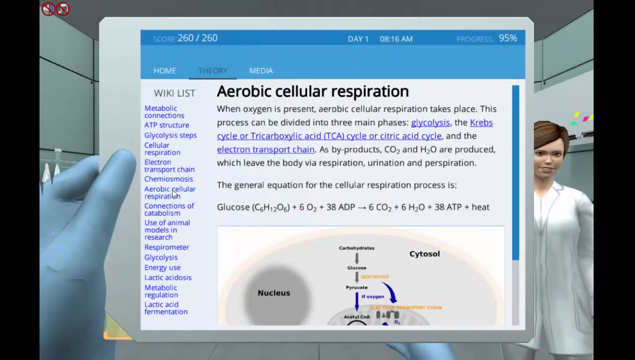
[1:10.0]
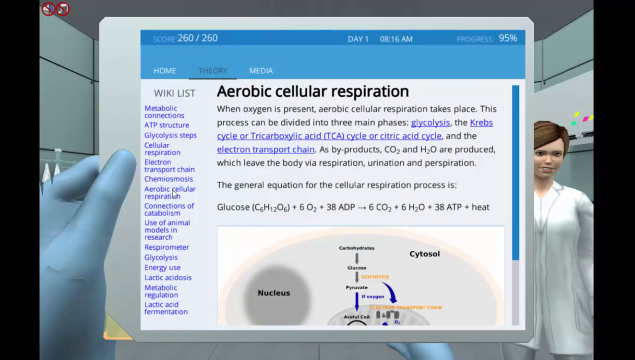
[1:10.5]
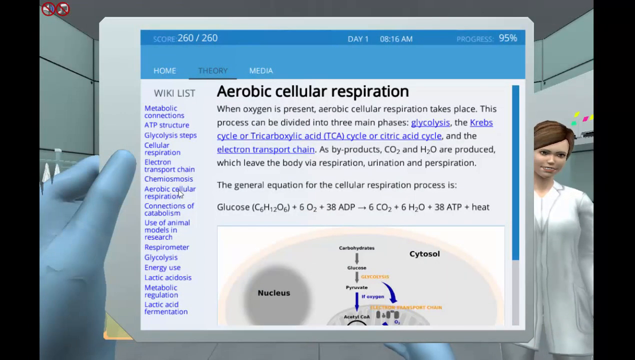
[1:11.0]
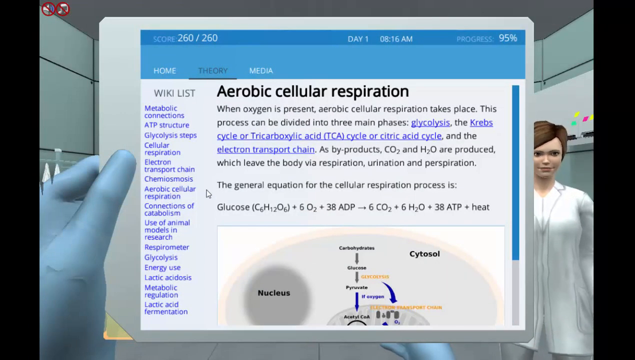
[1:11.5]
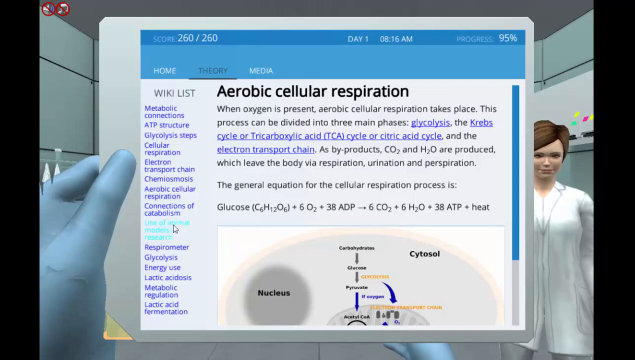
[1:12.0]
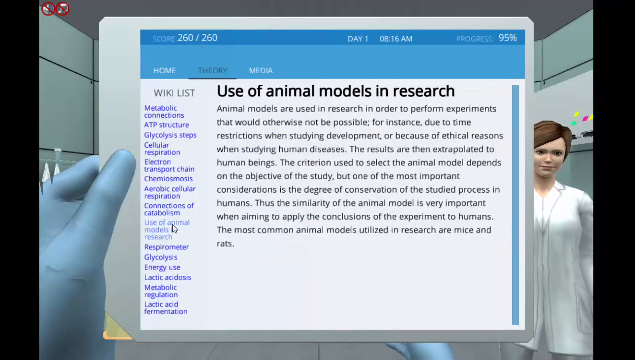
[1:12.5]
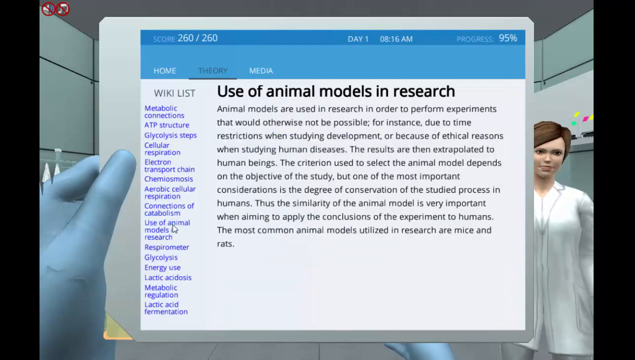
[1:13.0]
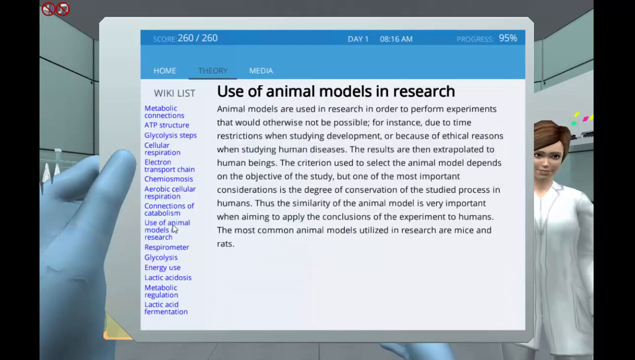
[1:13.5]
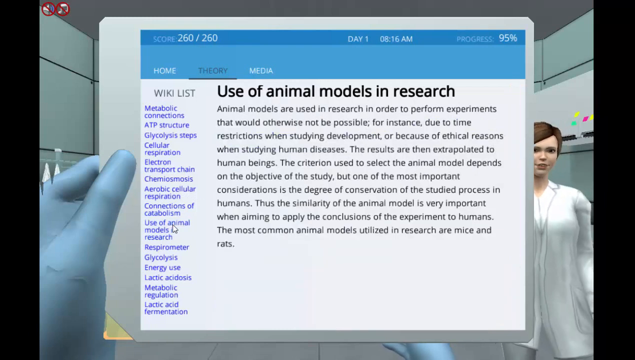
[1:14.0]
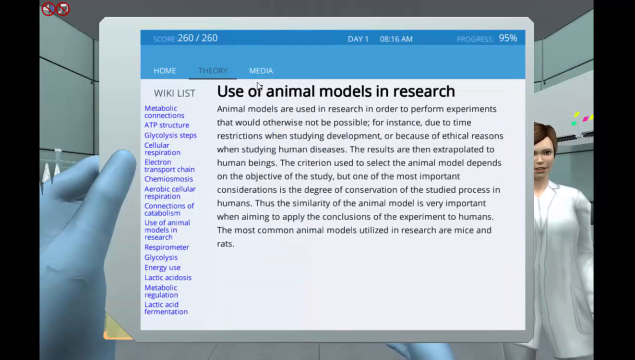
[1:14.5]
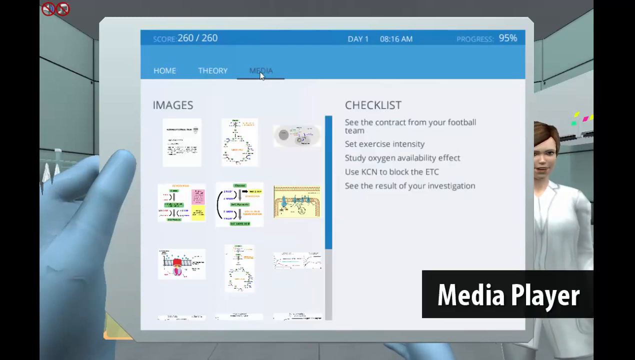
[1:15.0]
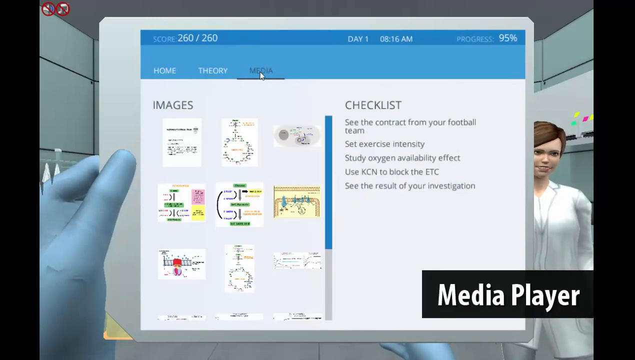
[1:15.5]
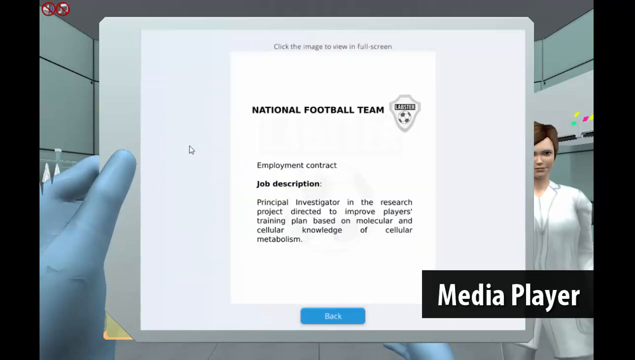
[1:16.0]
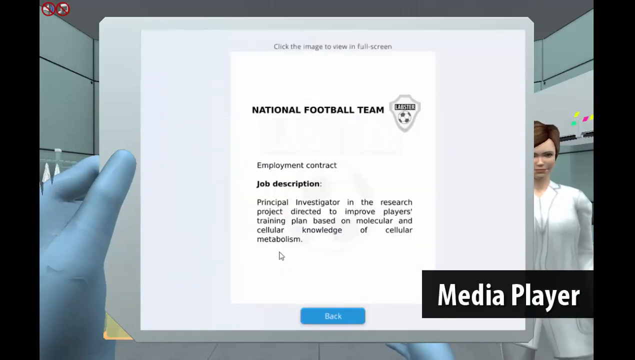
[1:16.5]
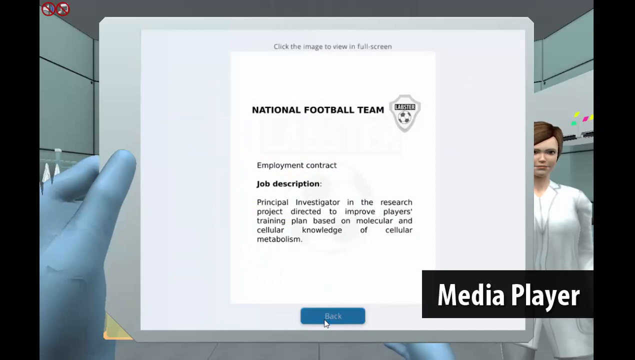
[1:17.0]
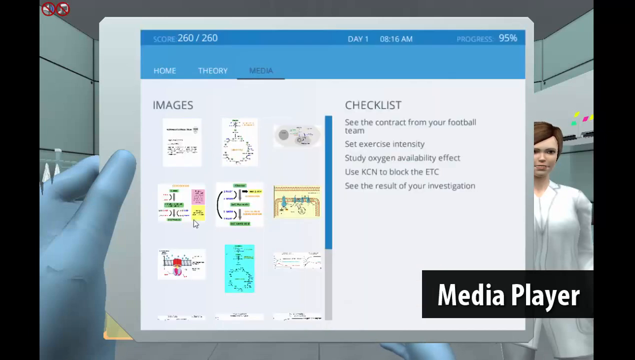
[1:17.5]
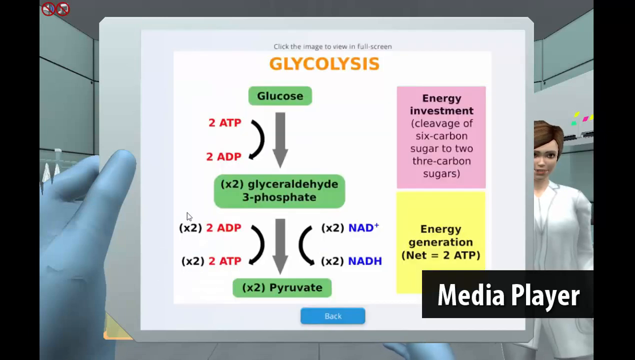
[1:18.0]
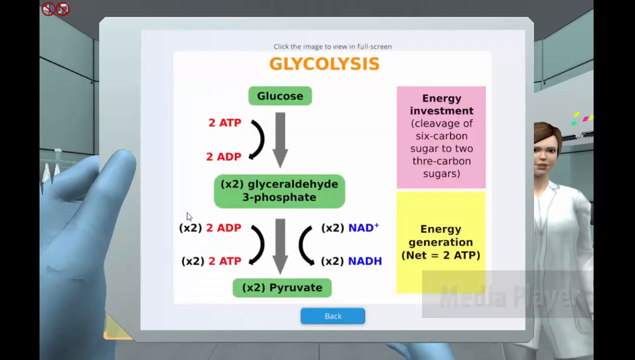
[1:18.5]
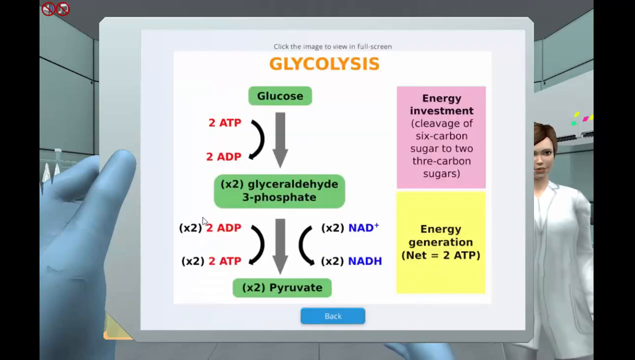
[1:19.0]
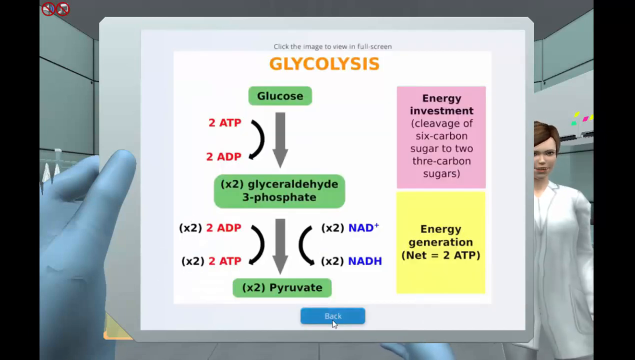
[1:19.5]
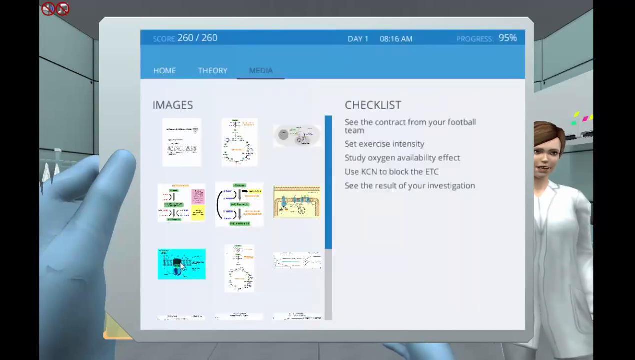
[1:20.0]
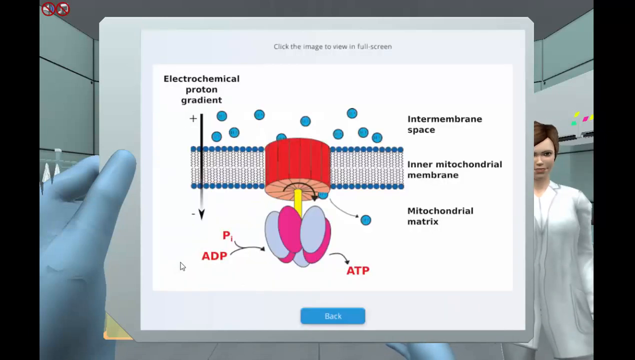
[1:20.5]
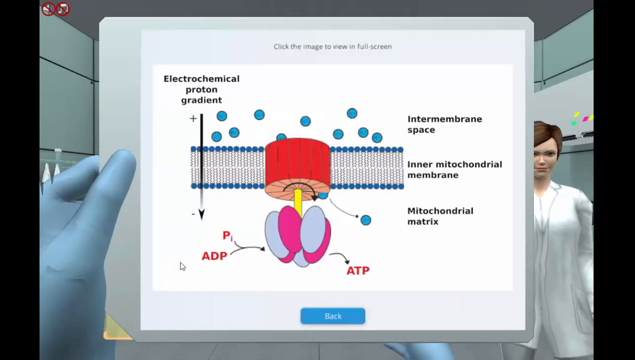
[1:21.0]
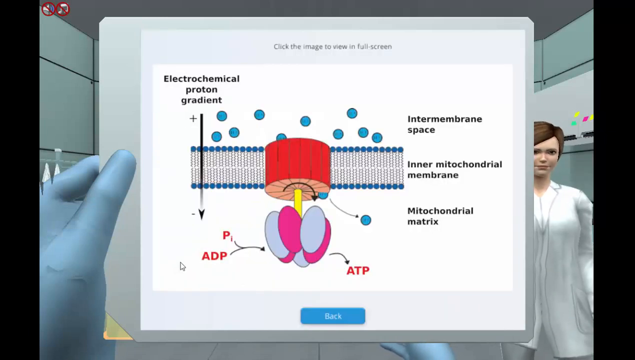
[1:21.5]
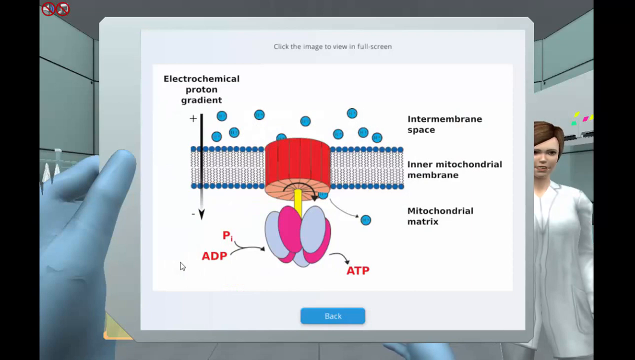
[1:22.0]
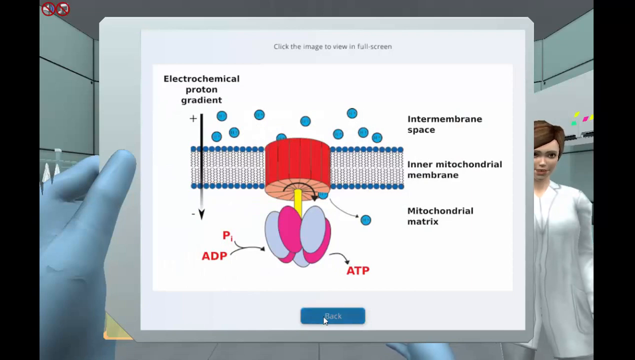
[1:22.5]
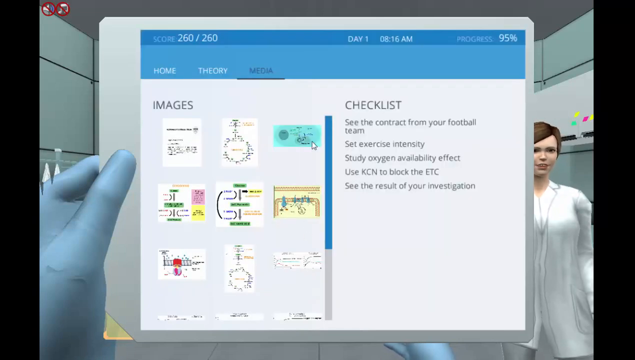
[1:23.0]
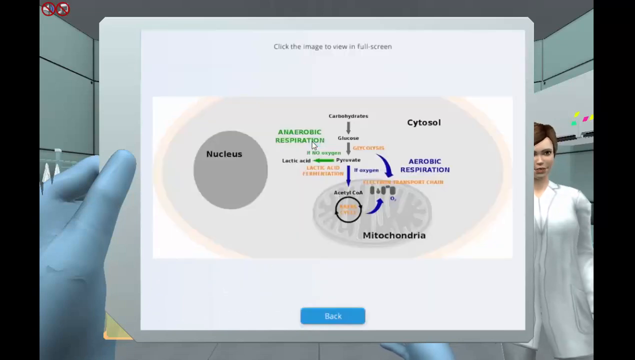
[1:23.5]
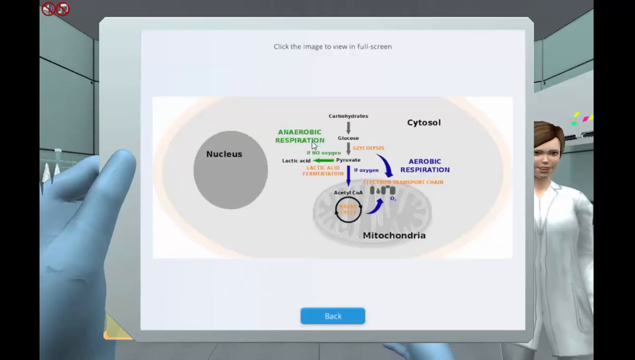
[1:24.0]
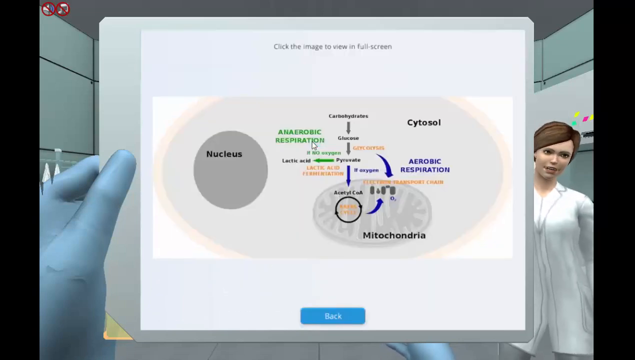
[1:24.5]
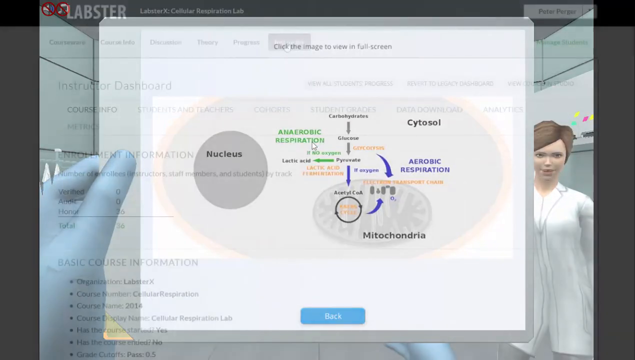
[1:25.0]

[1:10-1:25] In a digital game, a video game hand wearing a blue rubber glove holds a piece of paper. At the very top it says "aerobic cellular respiration", and under that "when oxygen is present aerobic cellular respiration takes place this process can be divided into three main phases", followed by the Krebs cycle or tricarboxylic acid TCA cycle or citric acid cycle and the electron transport chain, then "as by product CO2 and H2O are produced which leave the body via respiration urination and perspiration". Underneath that it says "a general equation for the cellular respiration process is". Past the sheet of paper, on the right, a digital woman with brown hair wearing a long white lab coat looks at the camera. The person then moves a mouse cursor around on the sheet, clicking different options on it.